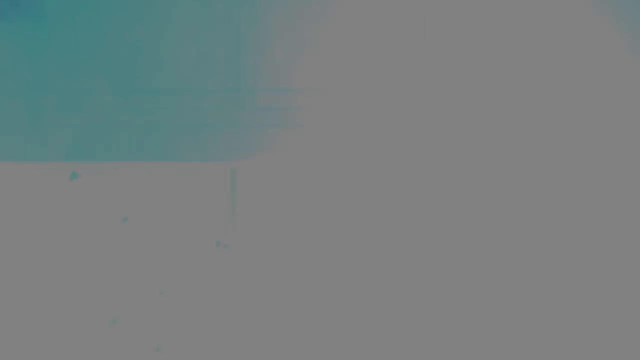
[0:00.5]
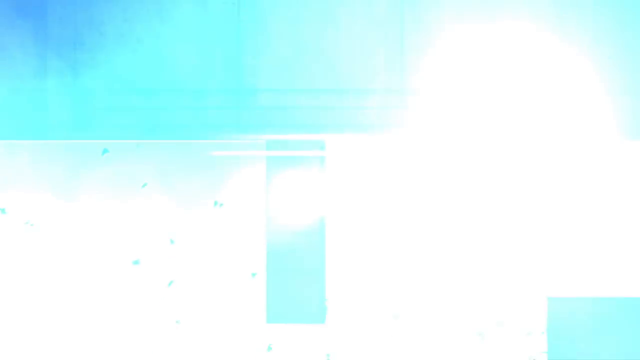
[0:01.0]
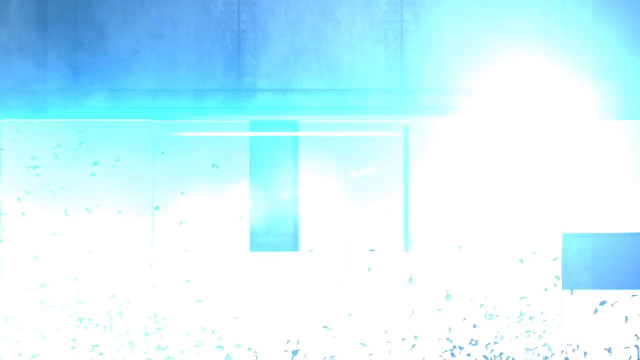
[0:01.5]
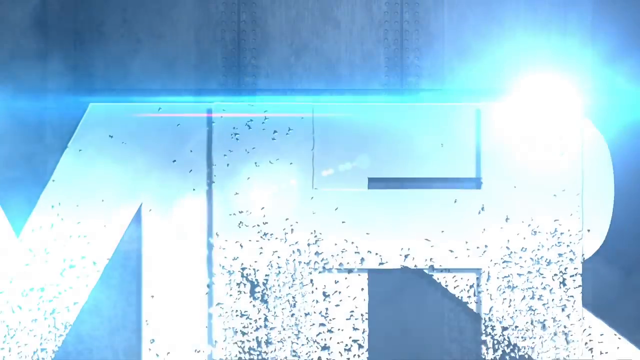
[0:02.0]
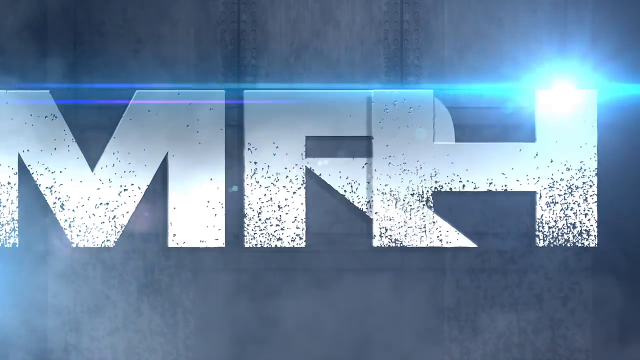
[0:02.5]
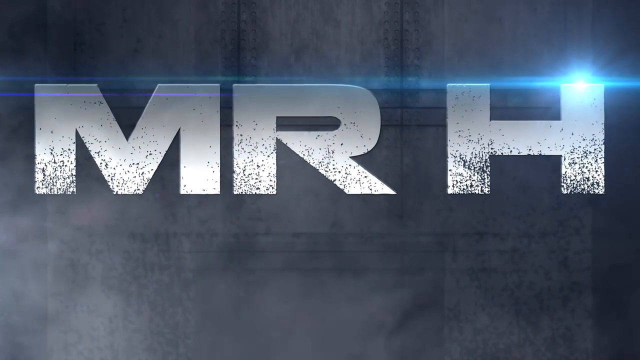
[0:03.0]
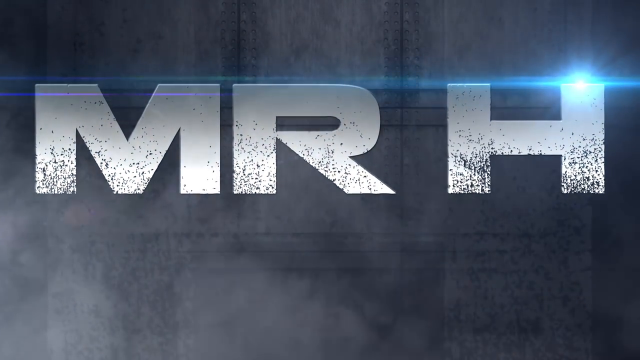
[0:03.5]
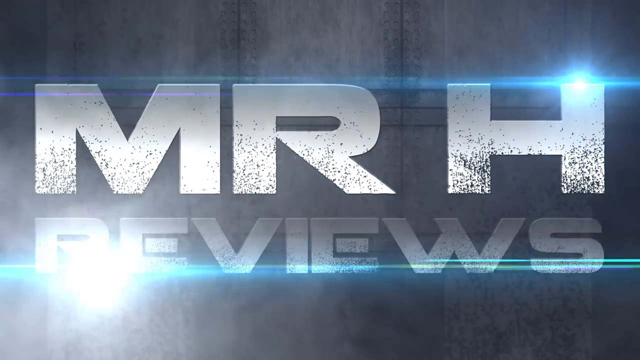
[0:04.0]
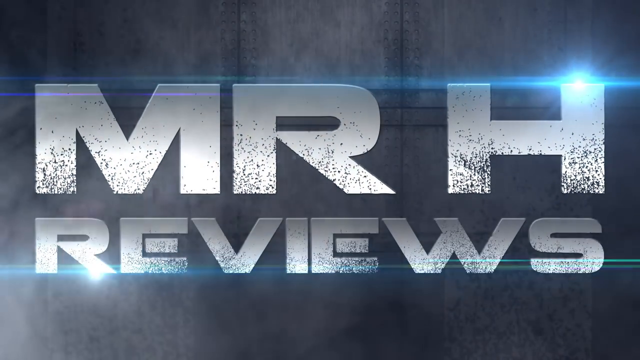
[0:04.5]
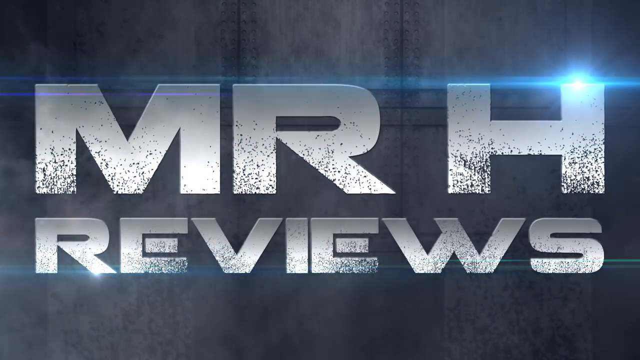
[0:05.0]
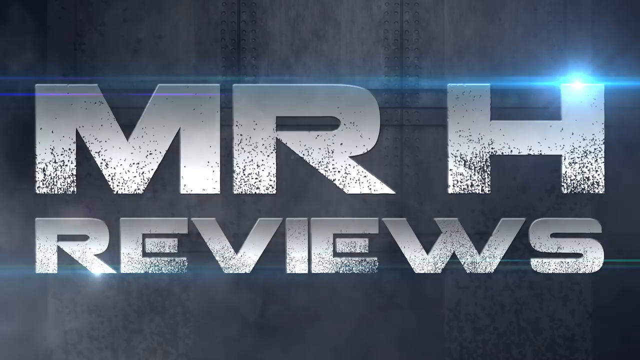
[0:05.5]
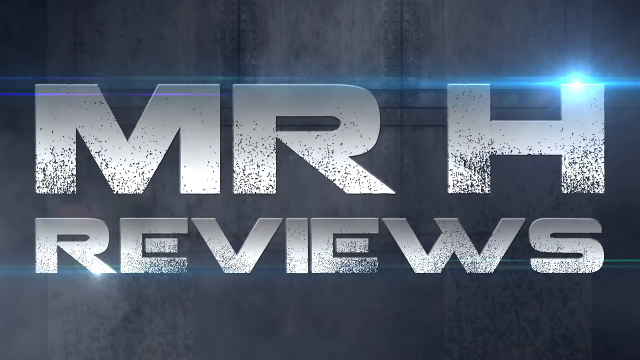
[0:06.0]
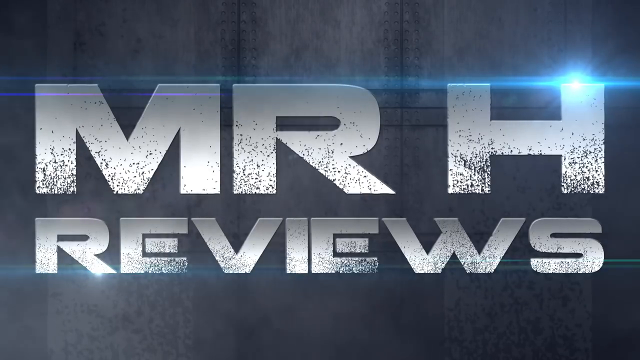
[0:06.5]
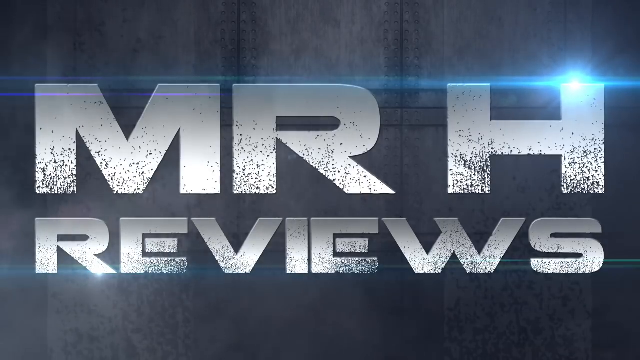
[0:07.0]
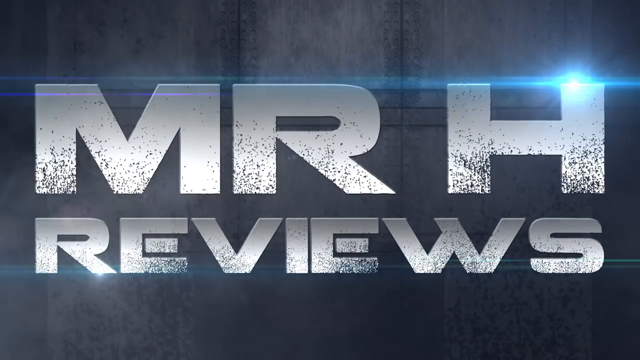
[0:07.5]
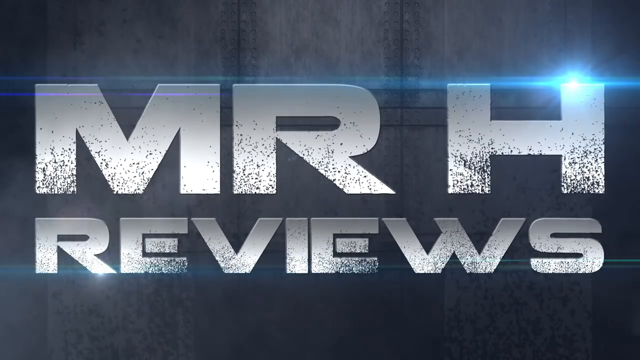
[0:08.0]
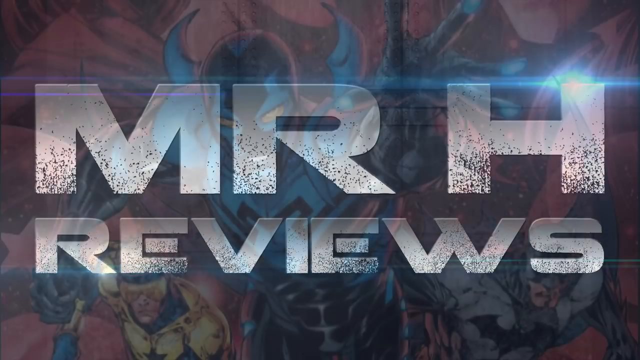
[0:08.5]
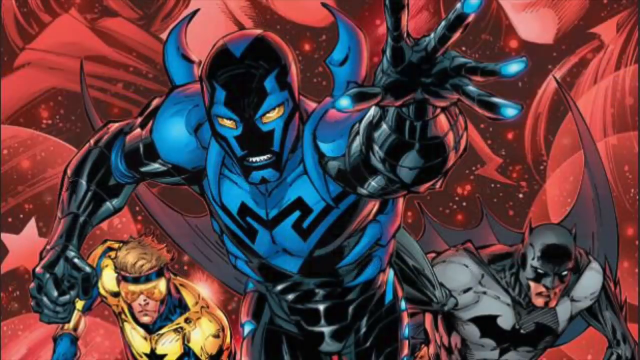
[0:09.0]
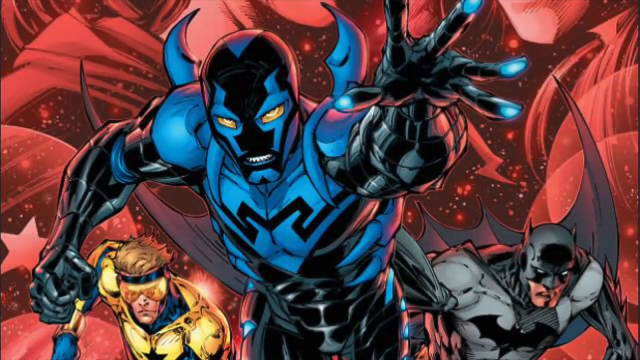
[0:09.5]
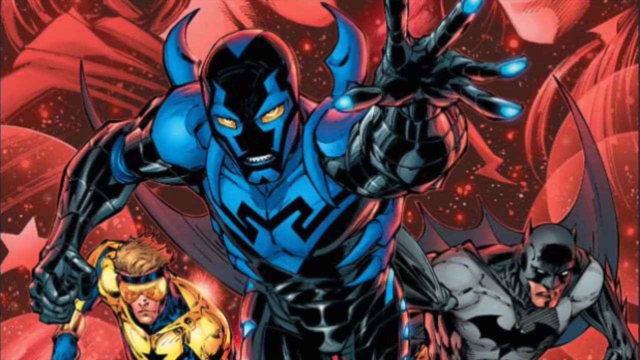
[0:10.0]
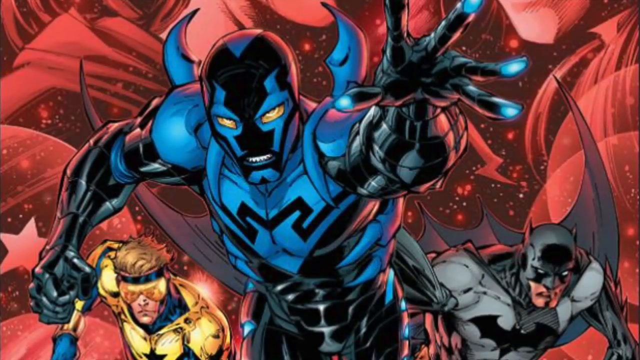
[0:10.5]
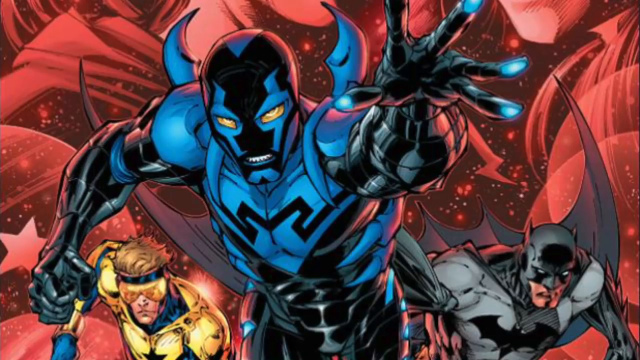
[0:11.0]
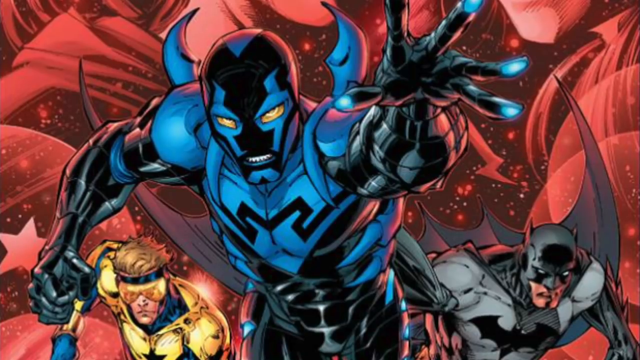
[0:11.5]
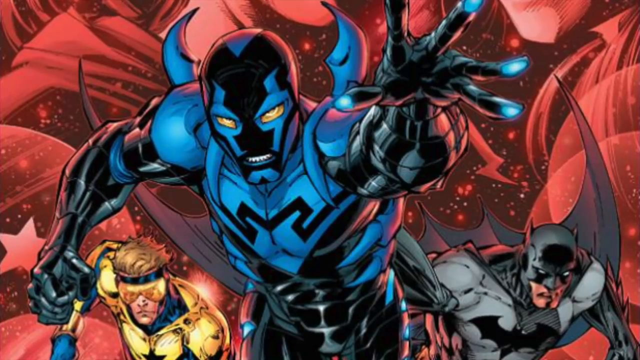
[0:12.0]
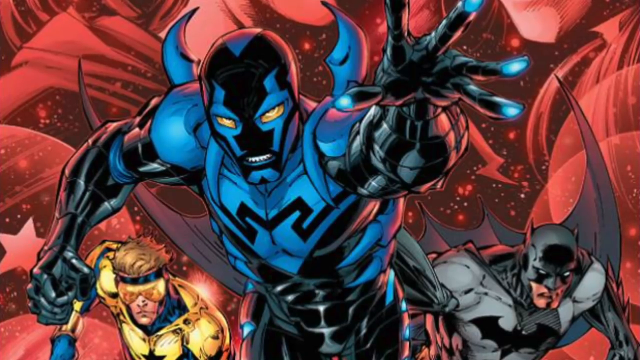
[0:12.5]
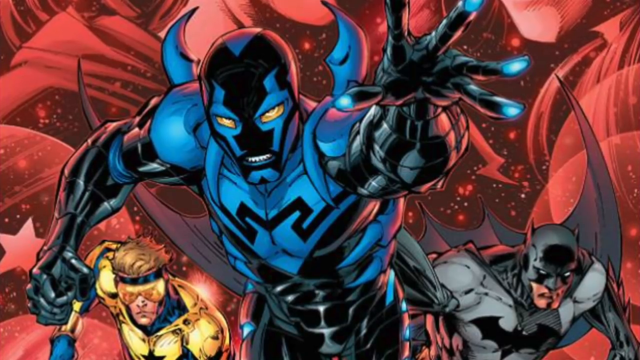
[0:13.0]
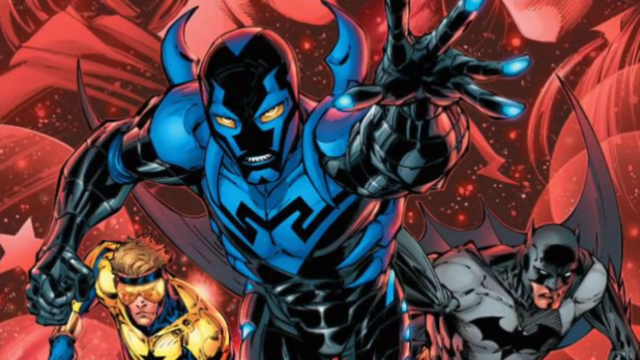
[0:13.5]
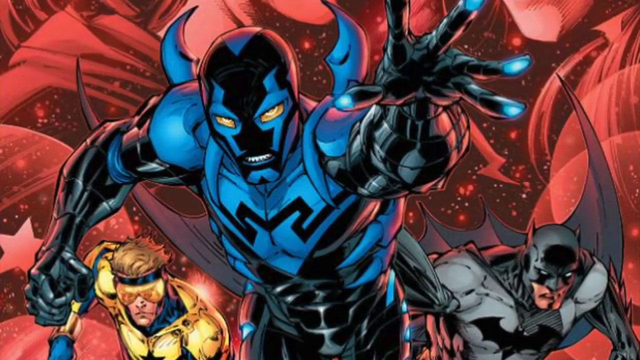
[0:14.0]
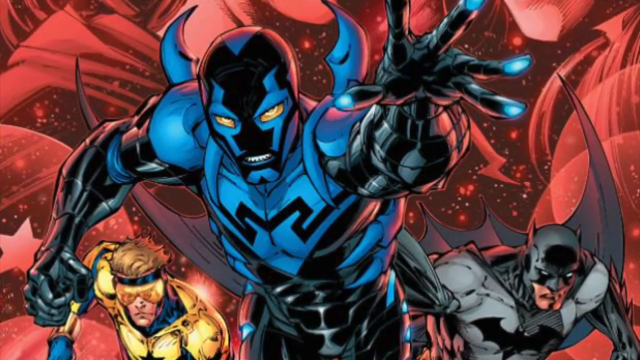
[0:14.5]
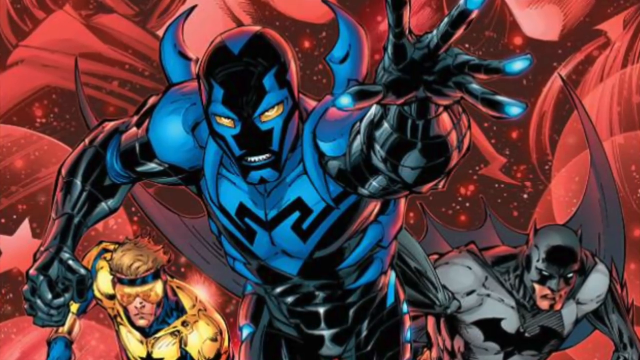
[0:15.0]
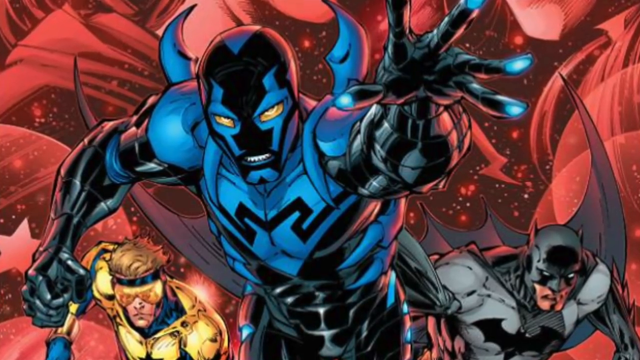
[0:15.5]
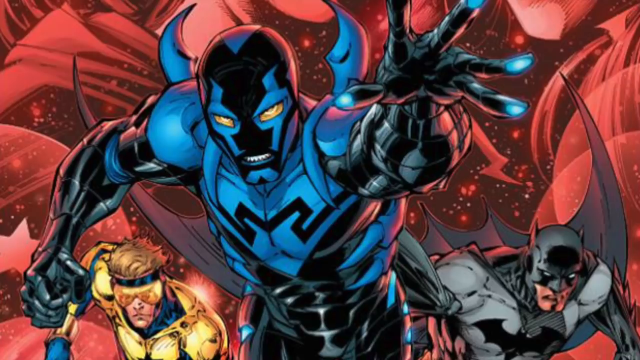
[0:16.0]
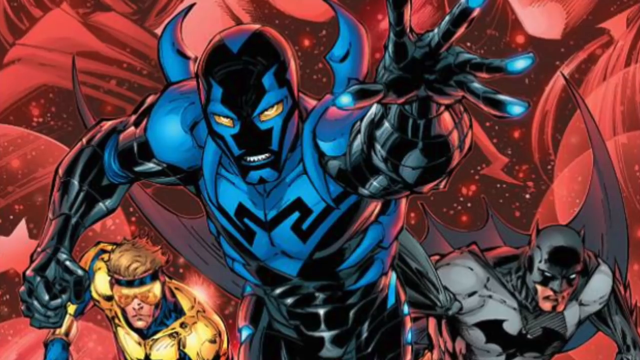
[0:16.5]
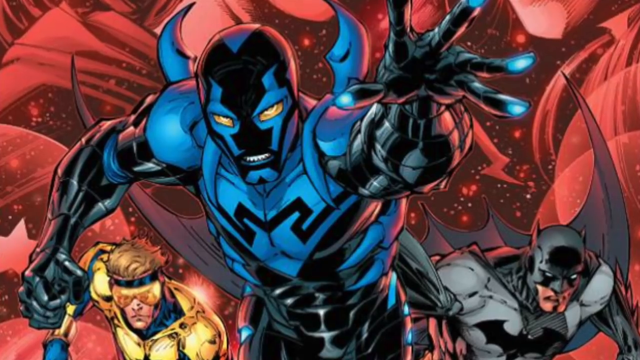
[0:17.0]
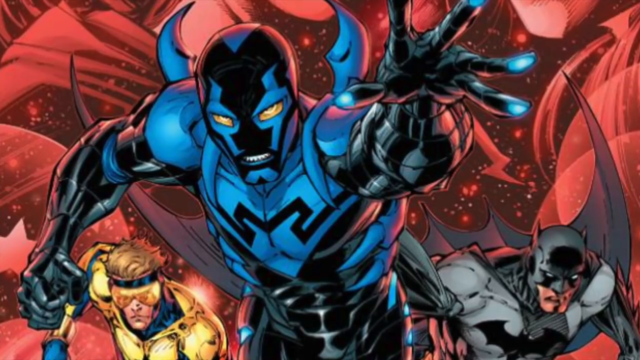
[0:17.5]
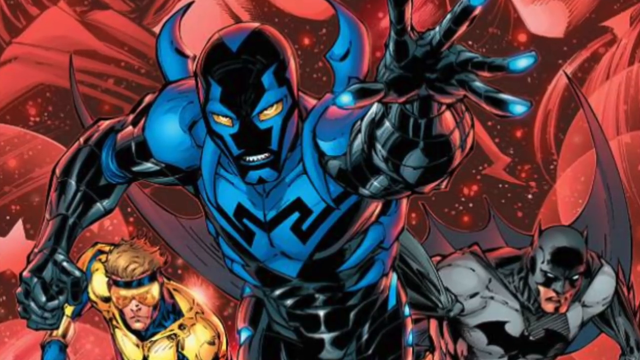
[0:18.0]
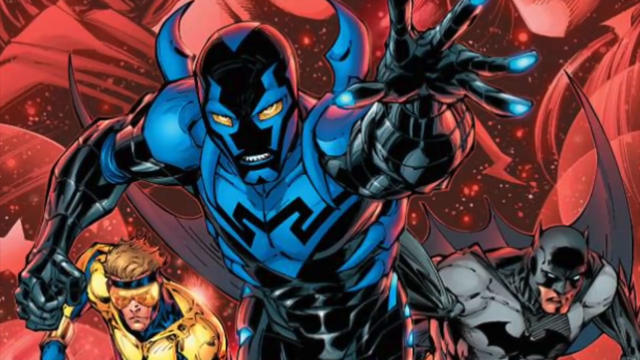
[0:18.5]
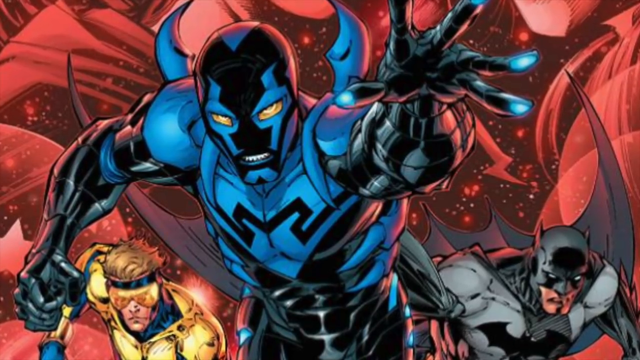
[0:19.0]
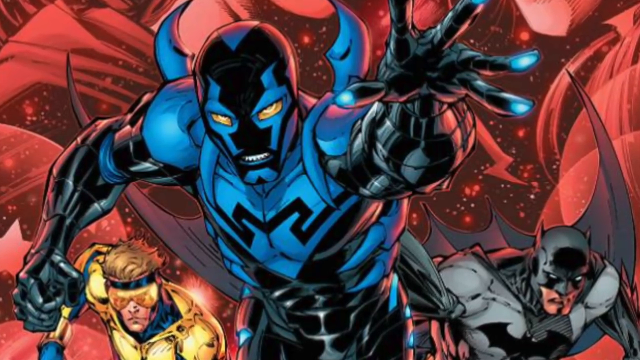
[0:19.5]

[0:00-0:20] In a cartoon animated style, three figures appear. The main one, at the front and centre of the frame, is blue with black patterns; he is quite hench and has almost a devil-like sort of piping at the back. He has his arm outstretched forward as if charging forwards, and he looks kind of determined rather than angry, or as if he is going to fight someone or something. To his left is what looks like Cyclops from X-Men, wearing a gold outfit, with blonde hair and a mask over his eyes. To the right of the main figure is what appears to be Batman. Both of these figures lean forwards as if charging along with the figure at the front. The background is a kind of abstract red, almost like some sort of red space; it looks like it could be a red universe with red planets and stars, so it looks a little spacey. The camera sort of pans in forwards, but not much else happens.